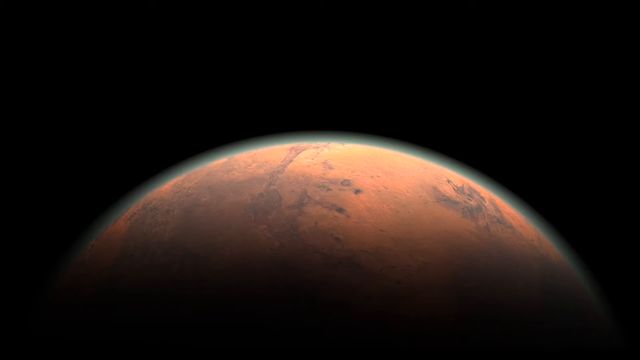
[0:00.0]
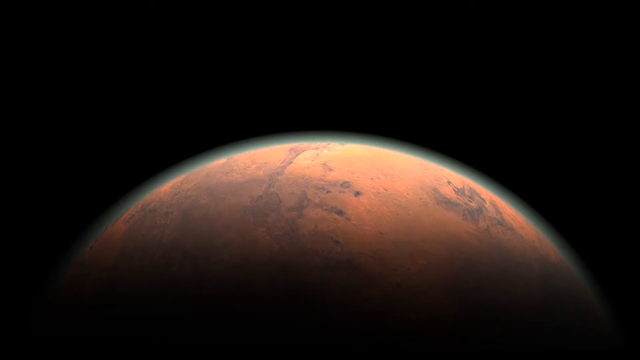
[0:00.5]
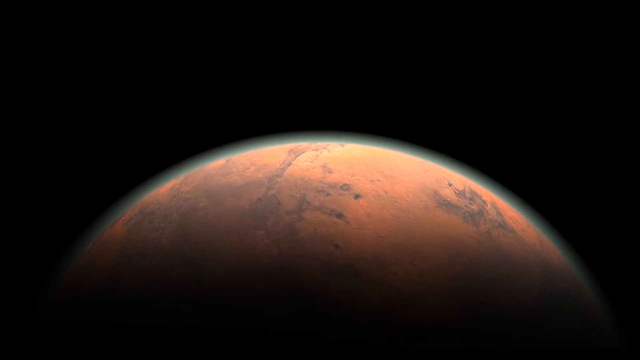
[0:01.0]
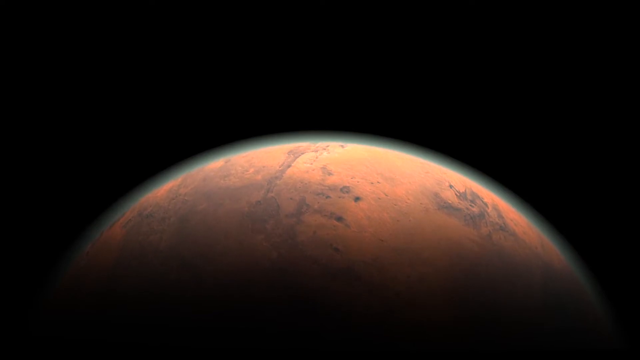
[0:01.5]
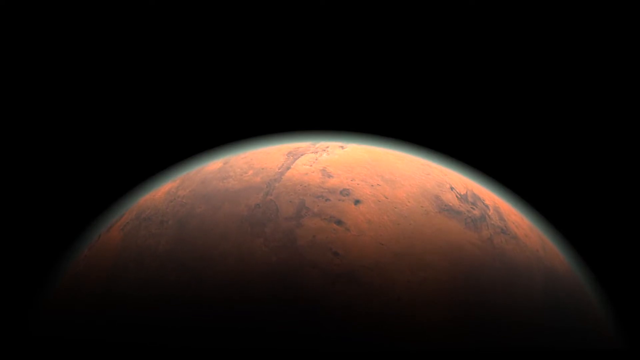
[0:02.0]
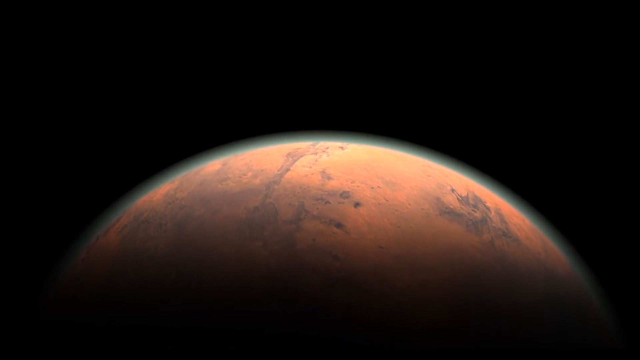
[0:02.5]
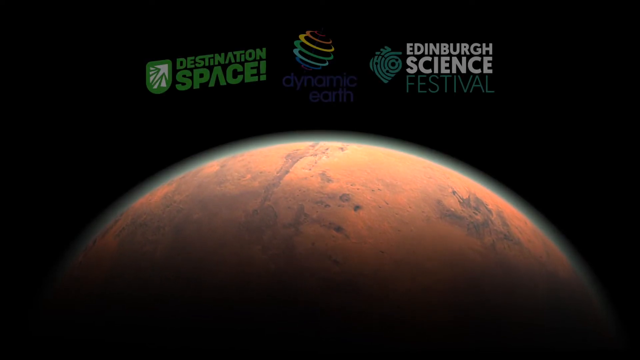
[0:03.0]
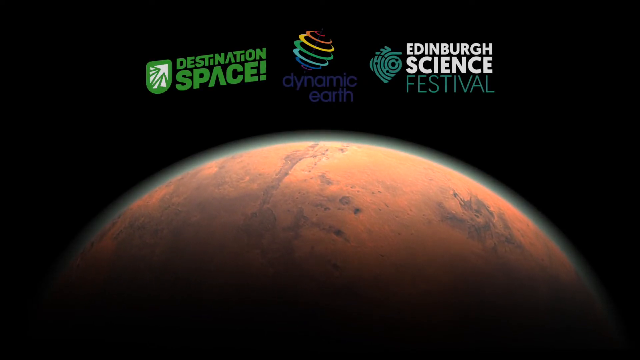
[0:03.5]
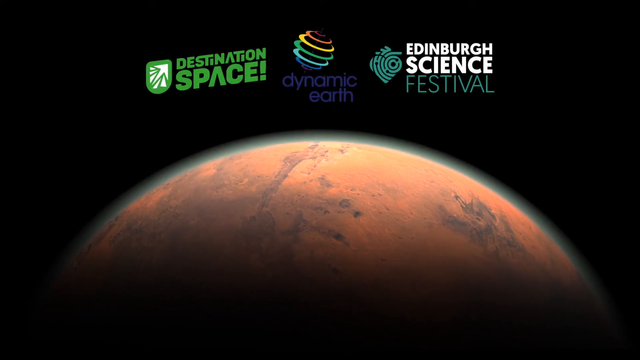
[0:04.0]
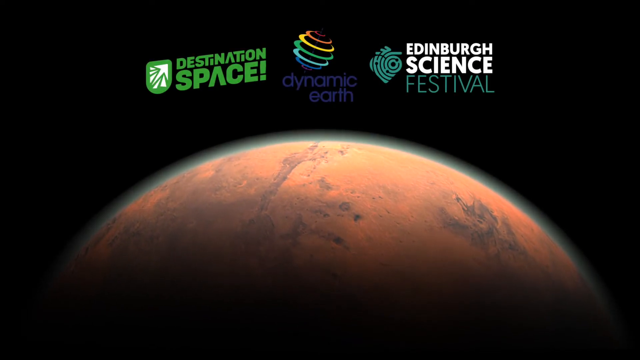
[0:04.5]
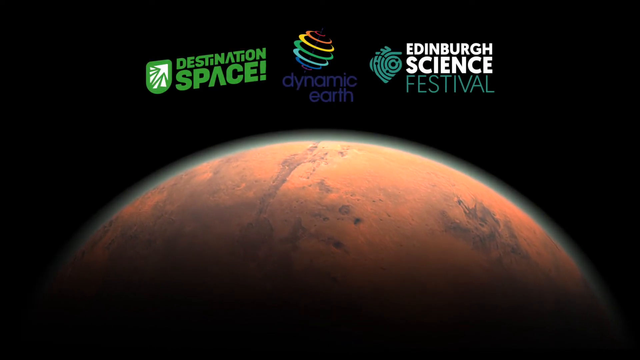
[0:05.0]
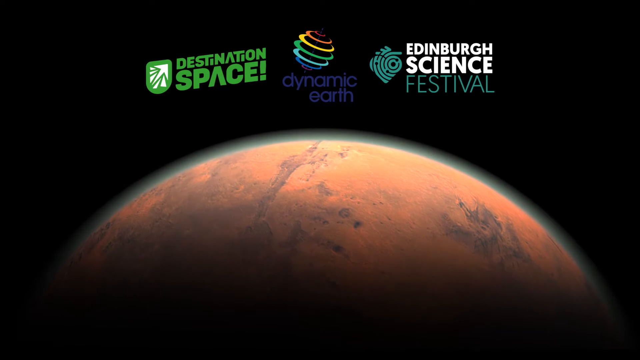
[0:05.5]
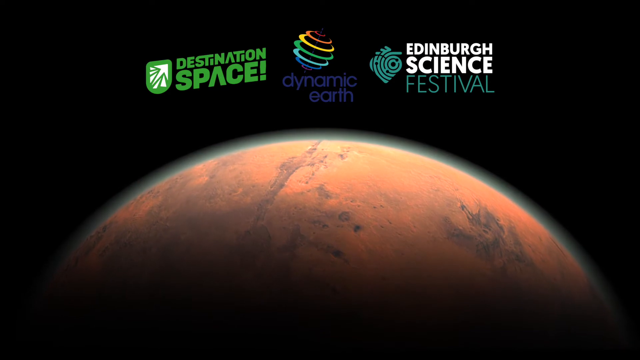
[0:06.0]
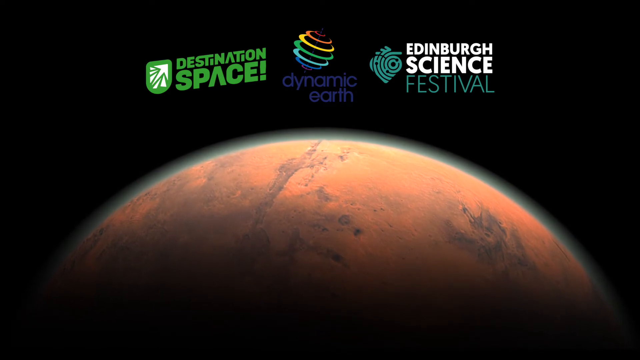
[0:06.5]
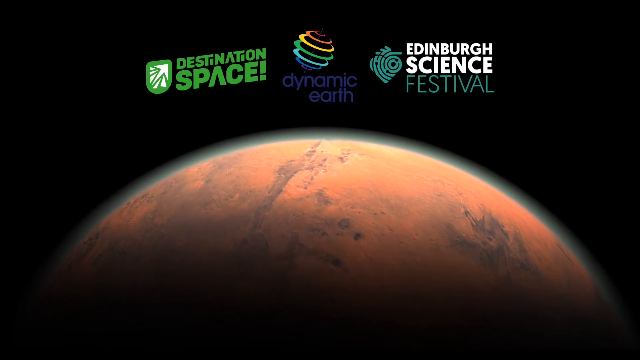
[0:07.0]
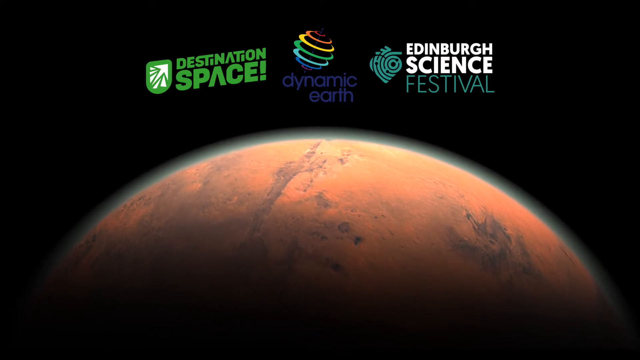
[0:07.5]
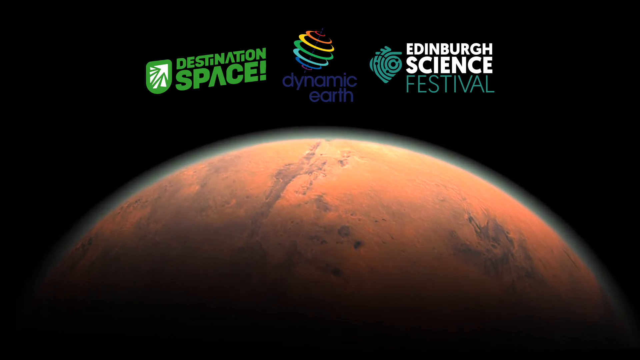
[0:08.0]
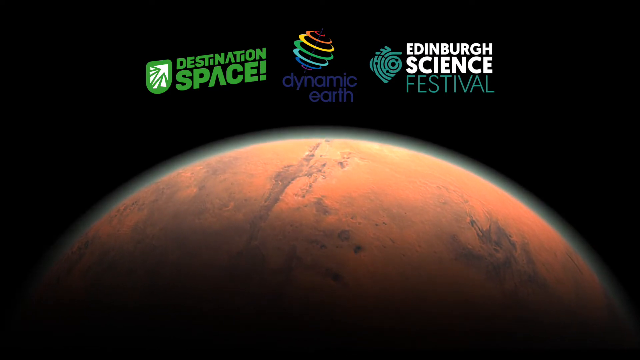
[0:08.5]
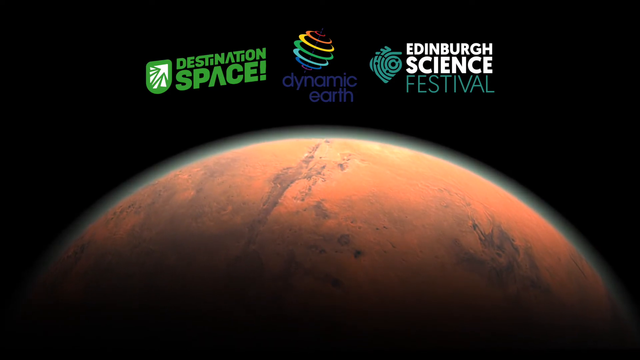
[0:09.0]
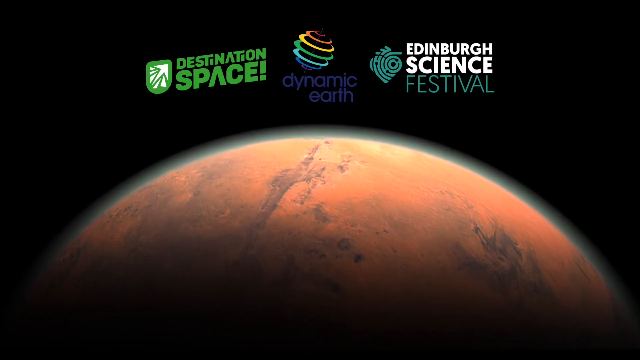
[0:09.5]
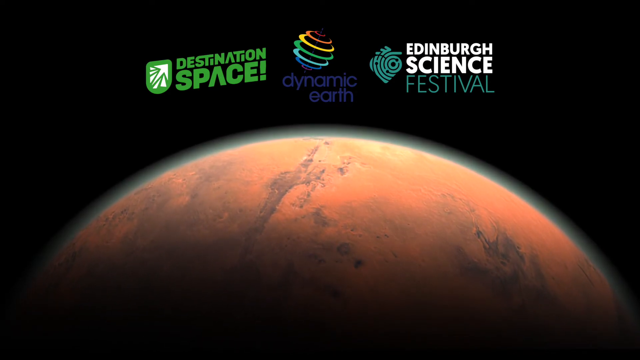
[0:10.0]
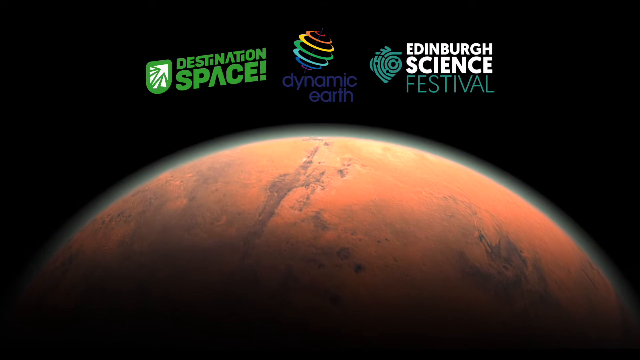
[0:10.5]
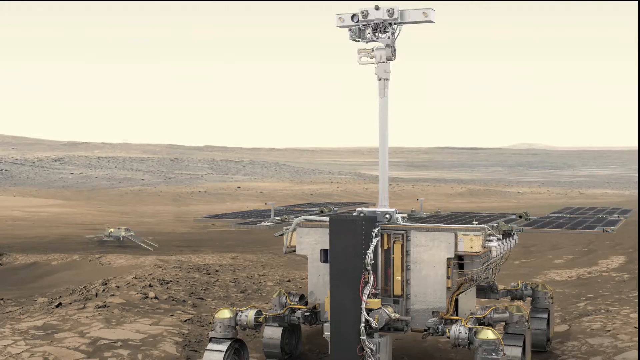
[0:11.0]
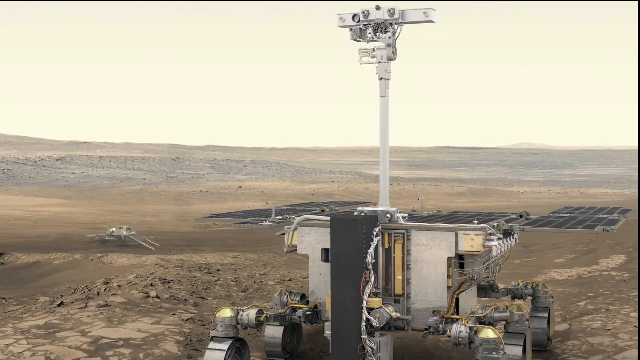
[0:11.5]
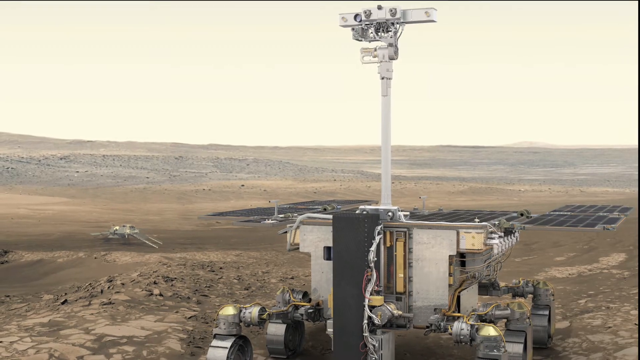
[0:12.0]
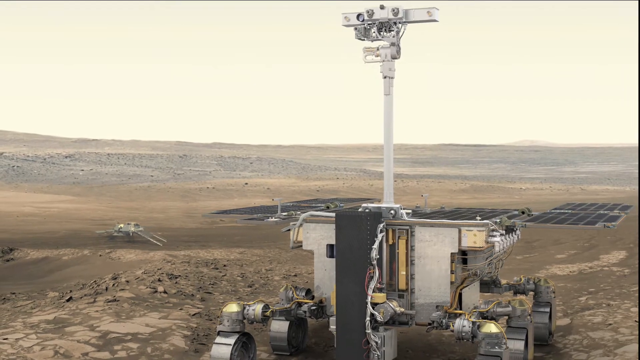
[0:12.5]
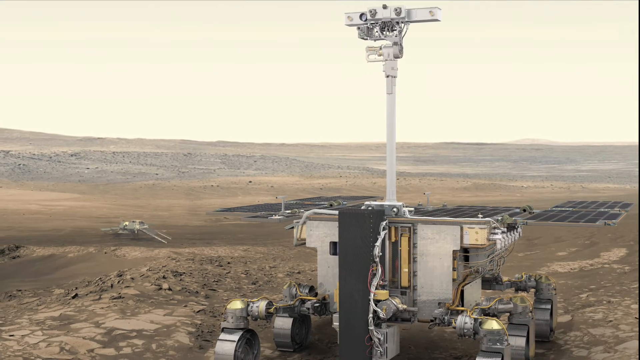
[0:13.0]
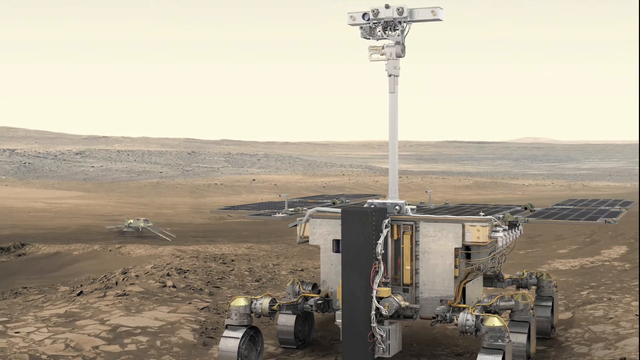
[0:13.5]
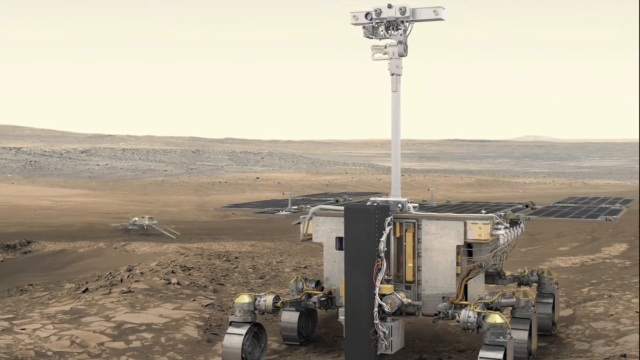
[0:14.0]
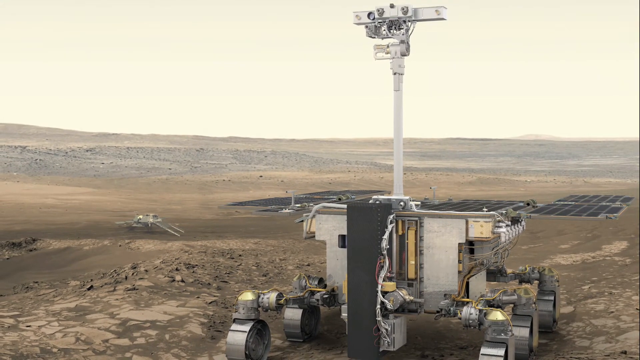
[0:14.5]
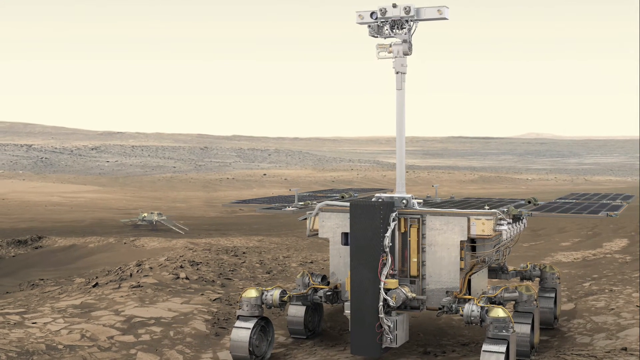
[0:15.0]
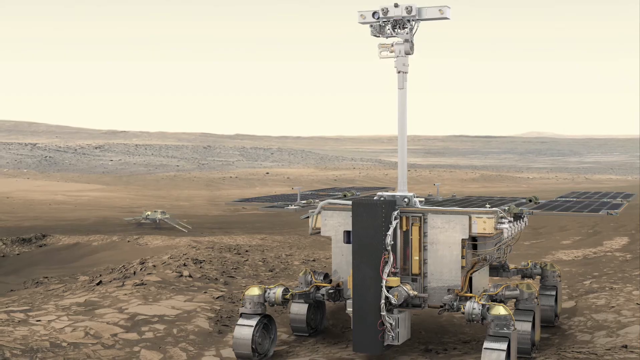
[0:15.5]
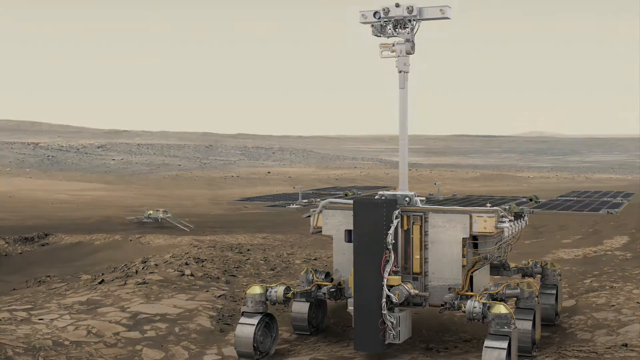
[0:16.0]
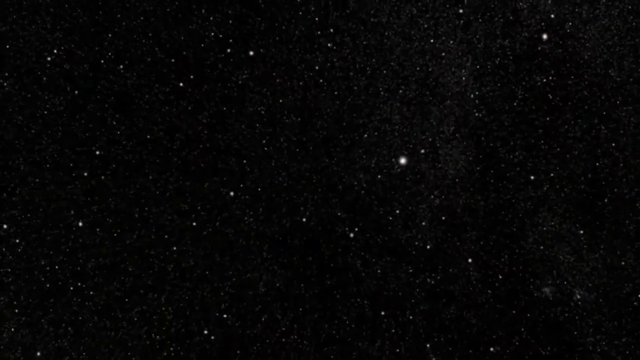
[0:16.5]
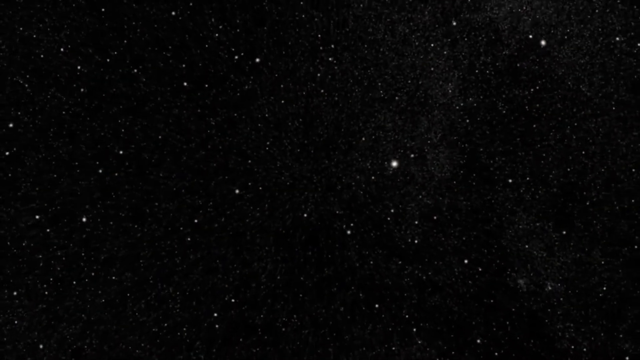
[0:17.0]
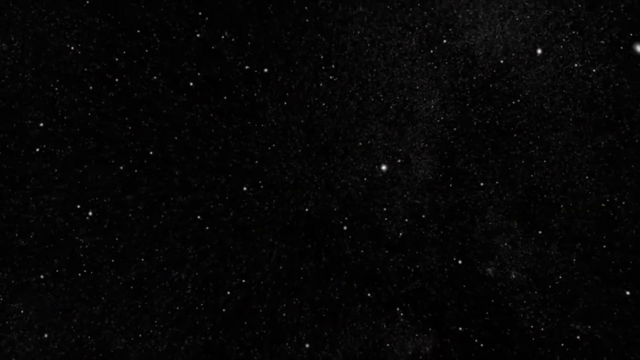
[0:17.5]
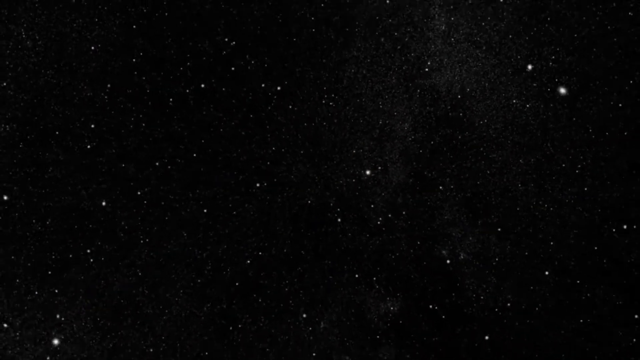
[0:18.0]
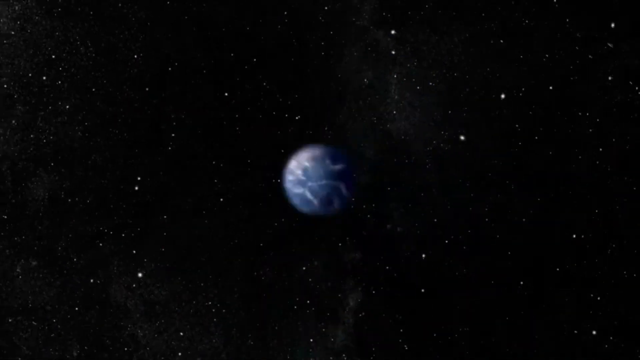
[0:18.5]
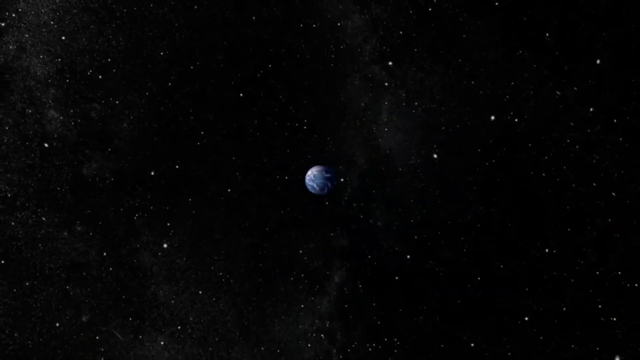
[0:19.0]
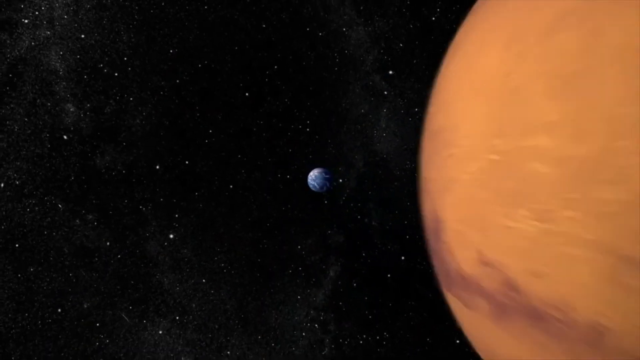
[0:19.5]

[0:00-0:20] A planet appears at the bottom of the frame while the whole top is black, and text reads "destination space", "dynamic earth" and "Edinburgh Science Festival". The words "destination space" are in green print. When "dynamic earth" appears there is a cylinder shape in many different colors; these words are hard to see because they are navy on the black background, while the other words are lighter and easy to read. Next there is something kind of like a satellite on a pole up high, and it looks like it has wheels so it could be rolled around on a surface. The view then zooms out into outer space, where the sky is very dark with white stars in the background, and two planets appear, one of which looks like Earth.